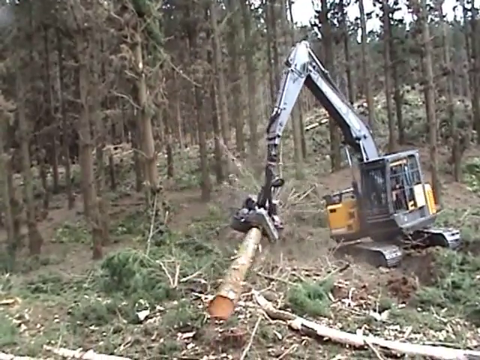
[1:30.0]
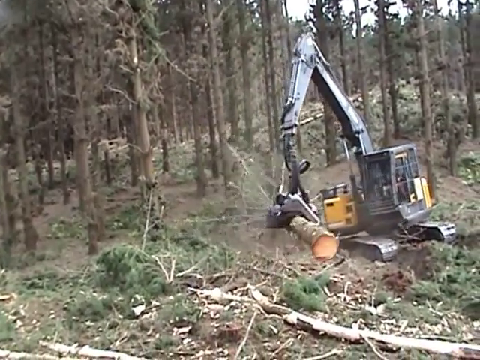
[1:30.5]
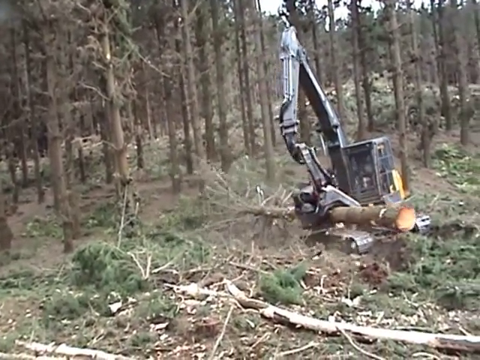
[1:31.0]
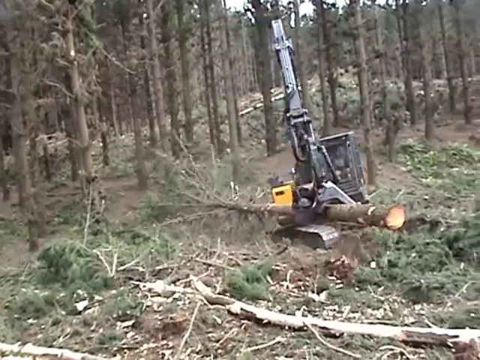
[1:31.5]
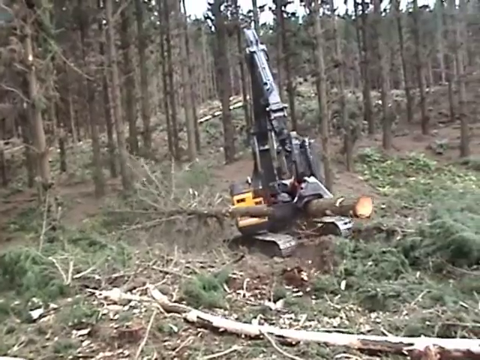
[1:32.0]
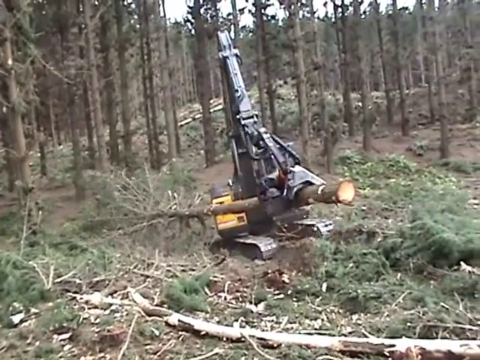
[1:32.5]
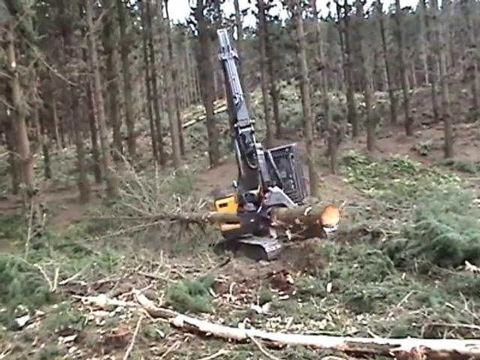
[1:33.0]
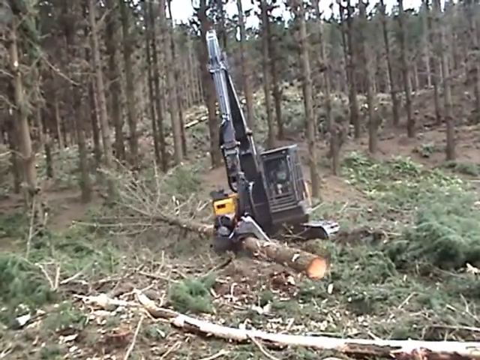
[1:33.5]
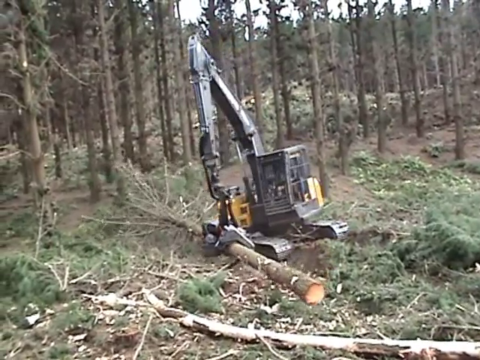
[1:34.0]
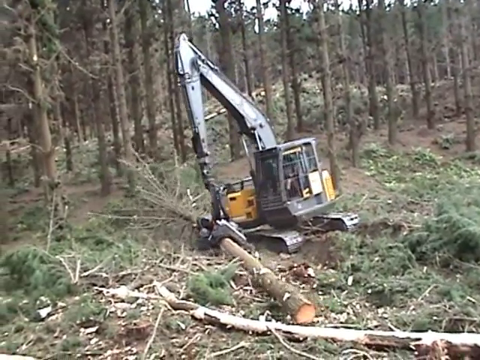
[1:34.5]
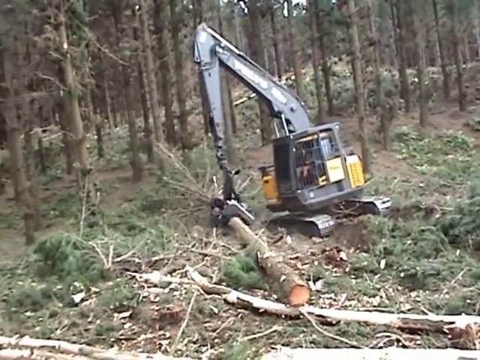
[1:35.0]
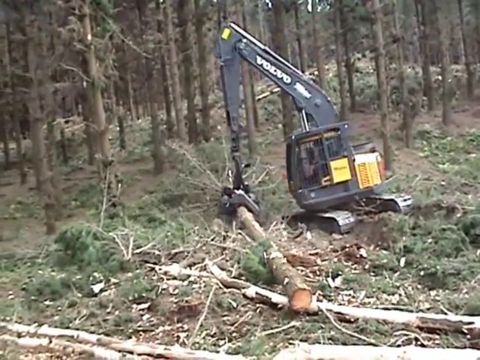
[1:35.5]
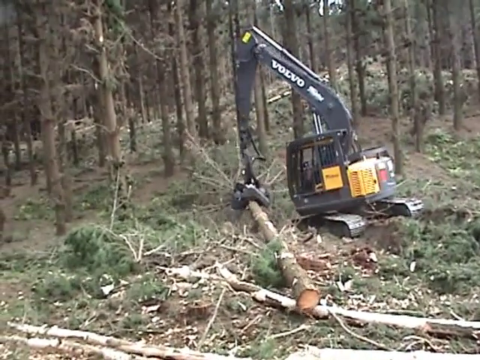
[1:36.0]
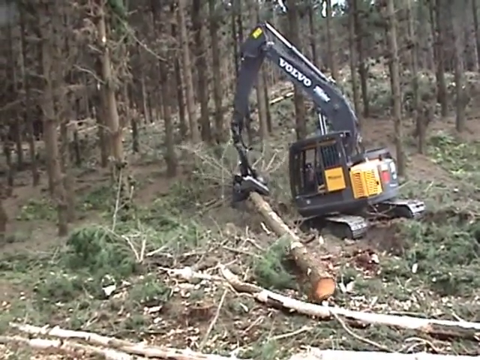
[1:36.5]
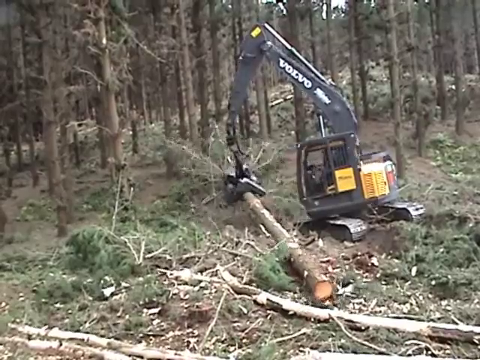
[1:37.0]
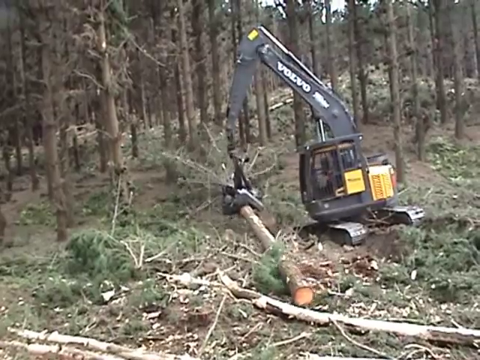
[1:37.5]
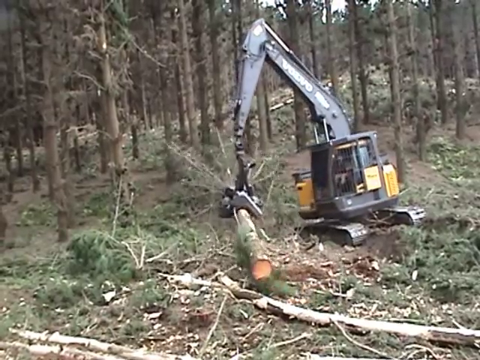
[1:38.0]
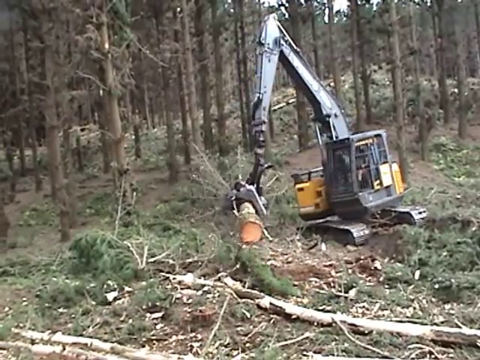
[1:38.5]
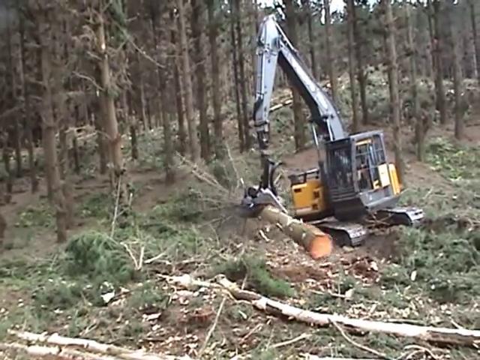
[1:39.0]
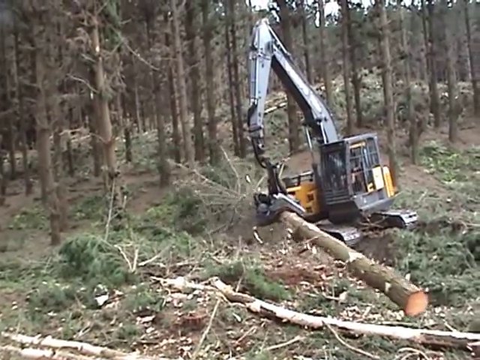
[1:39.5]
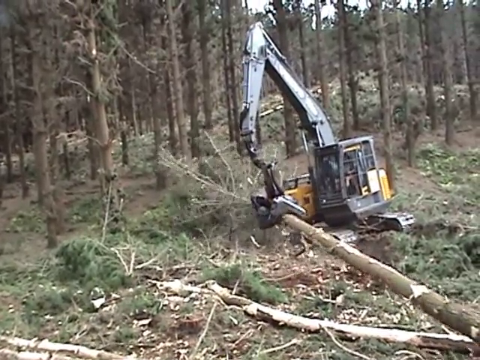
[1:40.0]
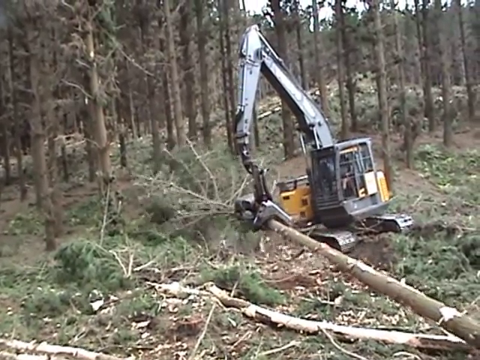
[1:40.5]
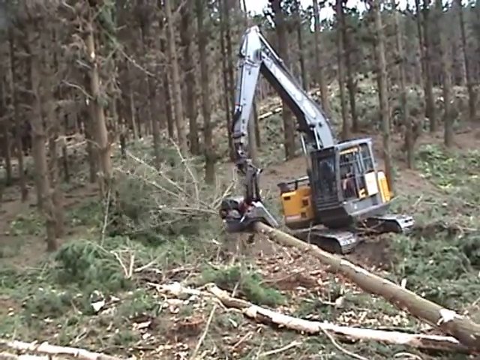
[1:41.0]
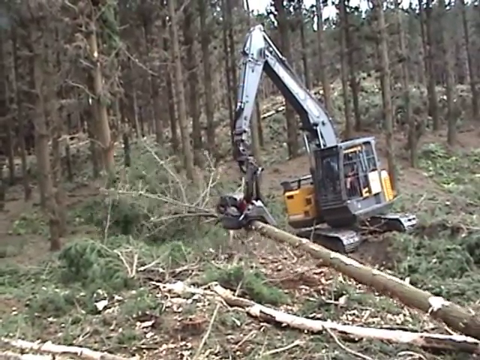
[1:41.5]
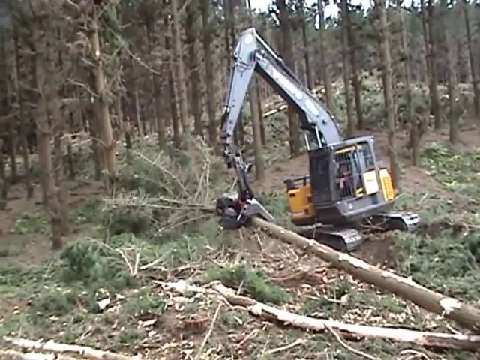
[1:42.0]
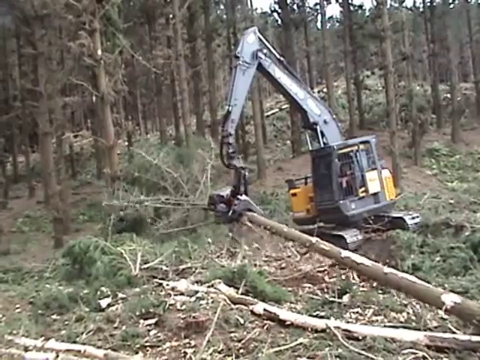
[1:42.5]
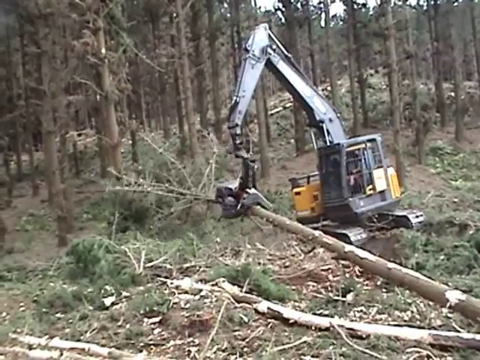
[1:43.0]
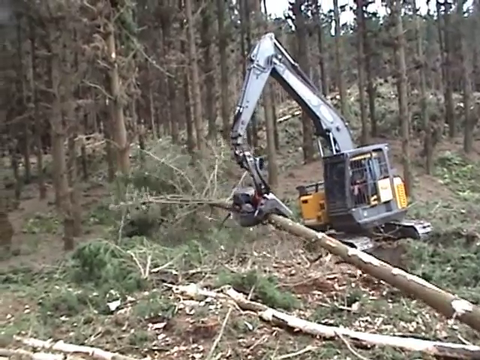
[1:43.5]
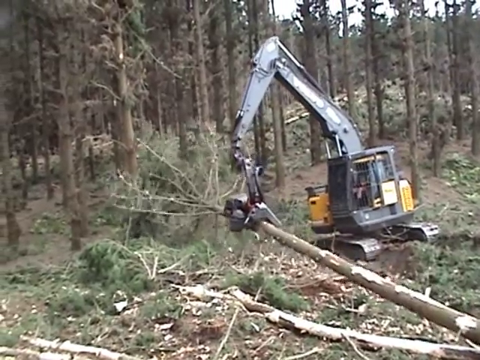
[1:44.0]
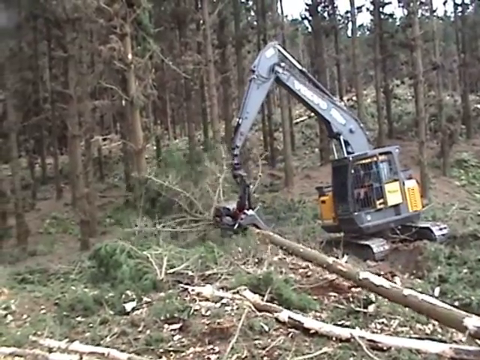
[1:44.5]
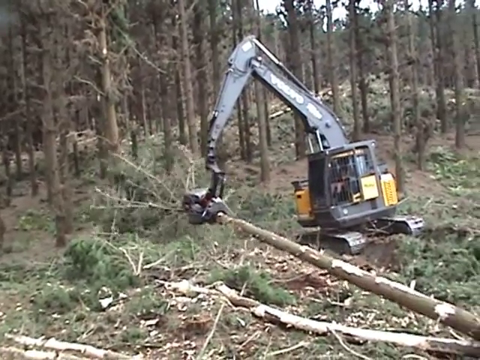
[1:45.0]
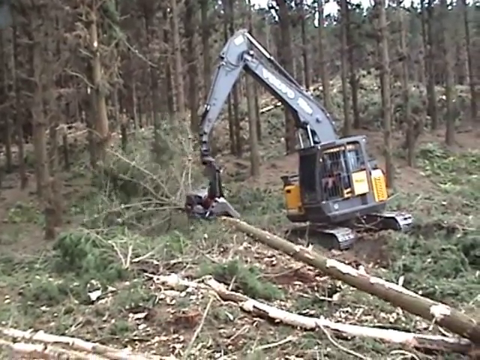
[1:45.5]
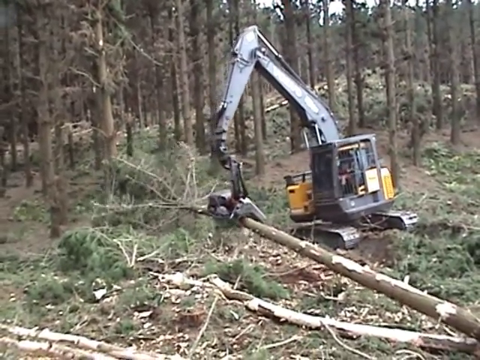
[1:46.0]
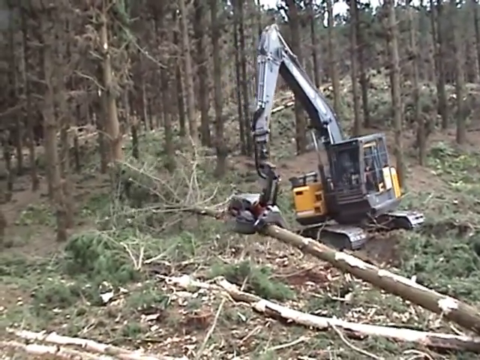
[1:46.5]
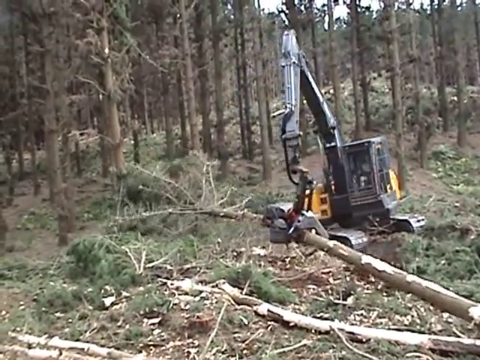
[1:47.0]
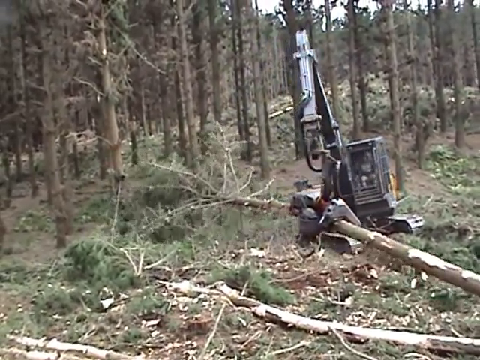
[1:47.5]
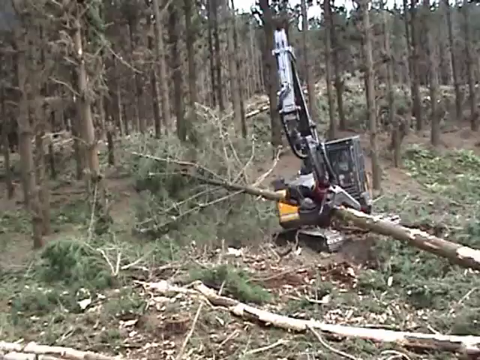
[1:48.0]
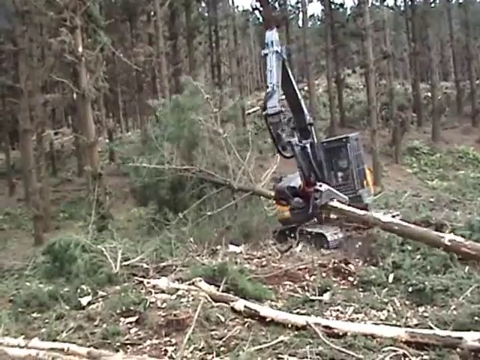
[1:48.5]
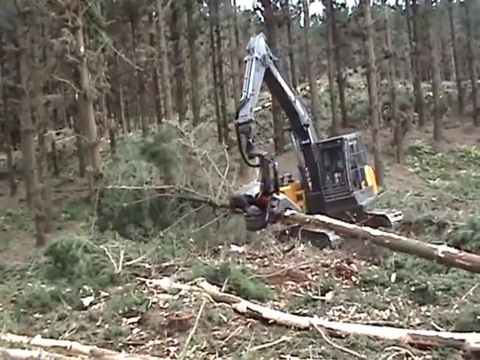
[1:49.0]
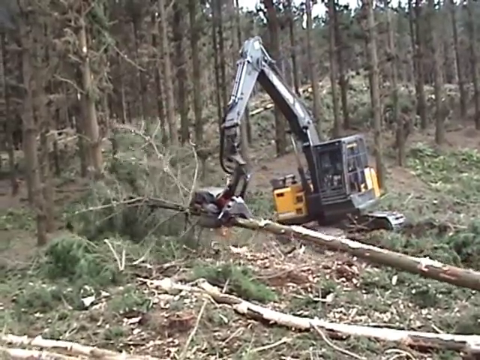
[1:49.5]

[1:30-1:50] The attachment continues cleaning the second tree, shaving off its branches and twigs. It stays clamped around the center of the trunk and slides up and down, the tree shifting in its weight, and it shaves off everything wider than its grip. It looks almost like a metal koala gripping a tree, and even seems a bit koala-shaped: the base of the tool, where it slices through the trunks, kind of looks like a koala's legs and bottom, when it moves upright its arms look like arms, and a wide-ish "head" looks kind of like a koala's head.